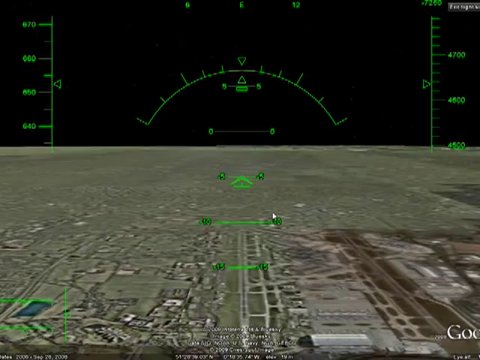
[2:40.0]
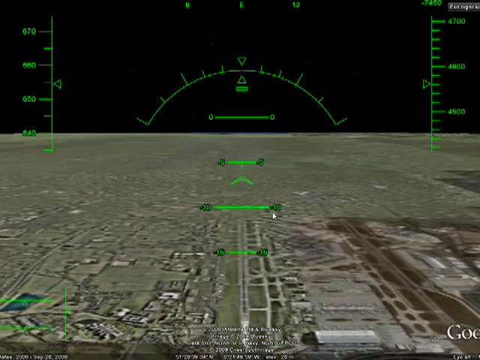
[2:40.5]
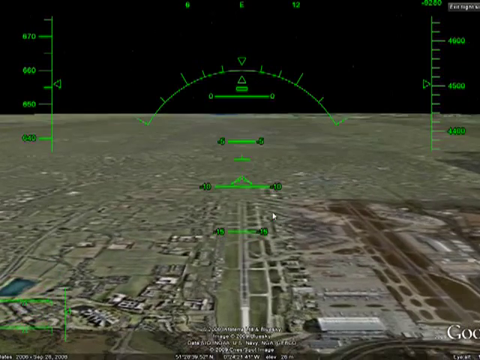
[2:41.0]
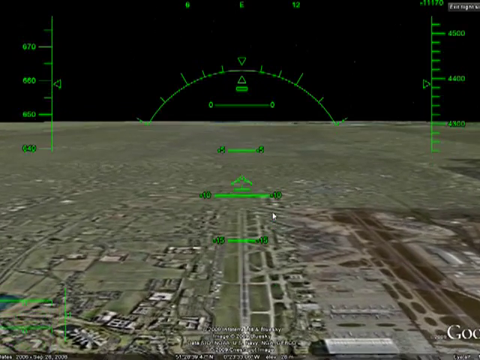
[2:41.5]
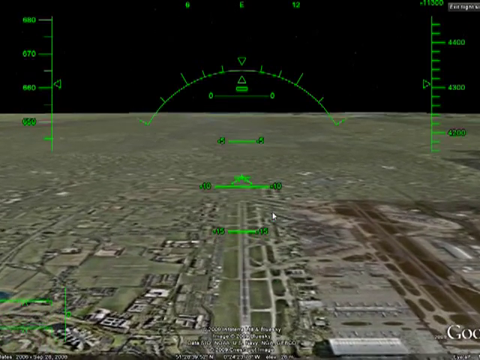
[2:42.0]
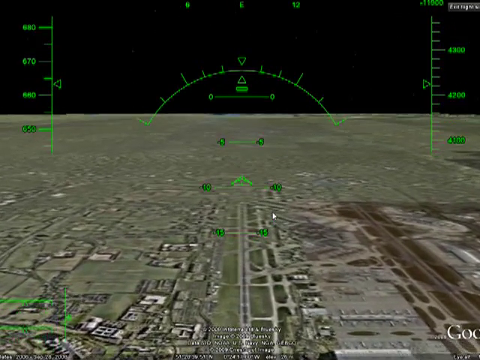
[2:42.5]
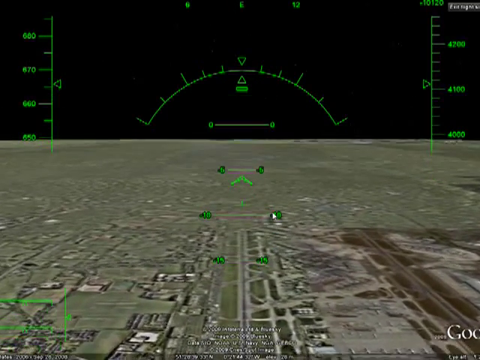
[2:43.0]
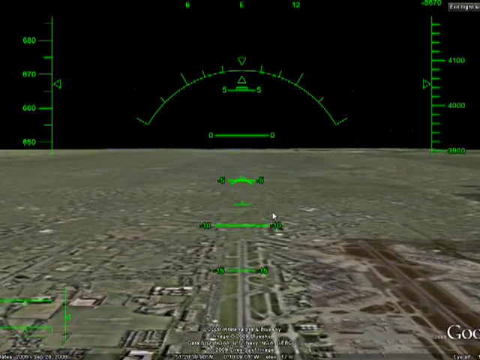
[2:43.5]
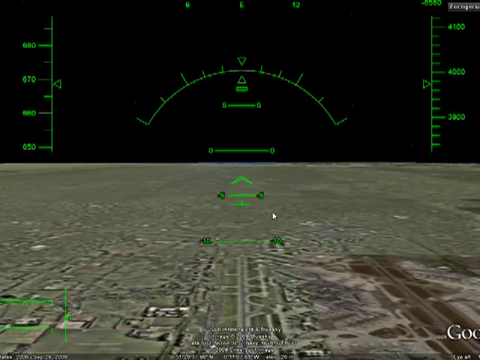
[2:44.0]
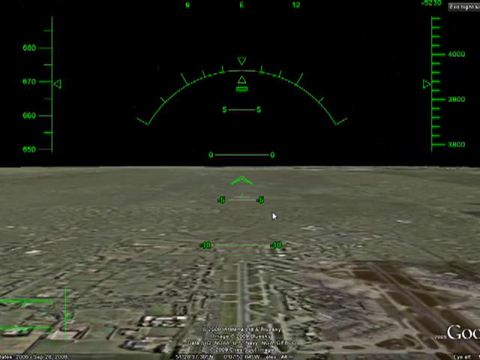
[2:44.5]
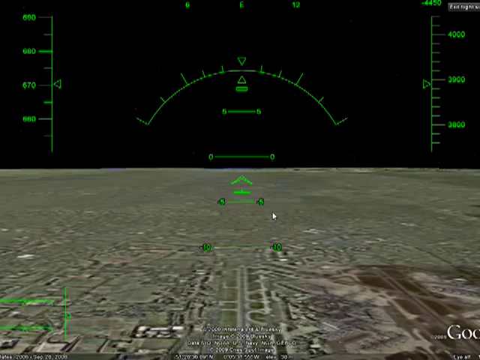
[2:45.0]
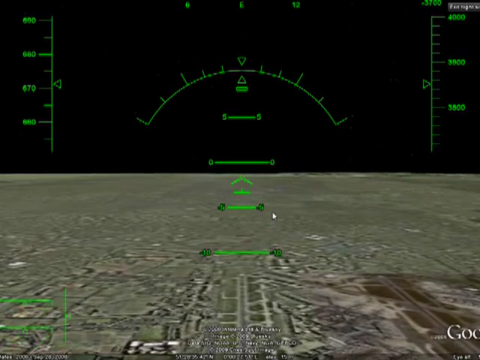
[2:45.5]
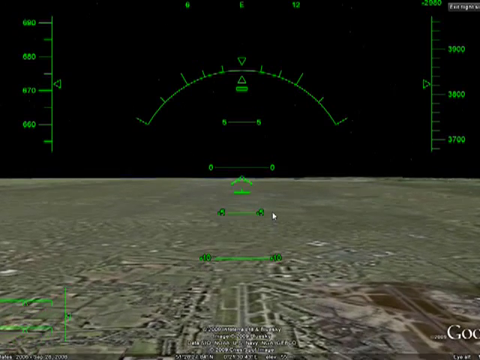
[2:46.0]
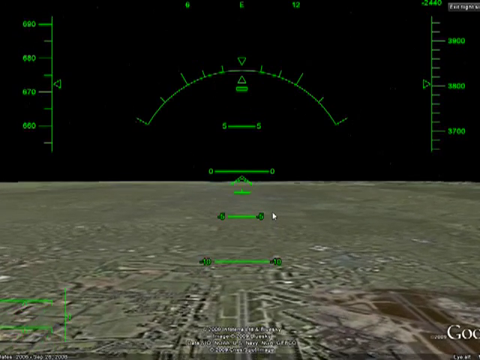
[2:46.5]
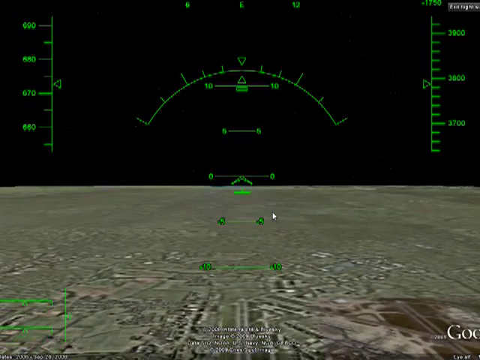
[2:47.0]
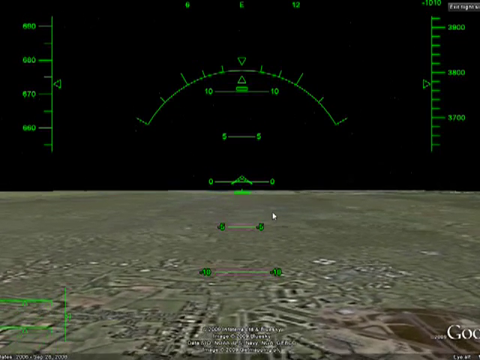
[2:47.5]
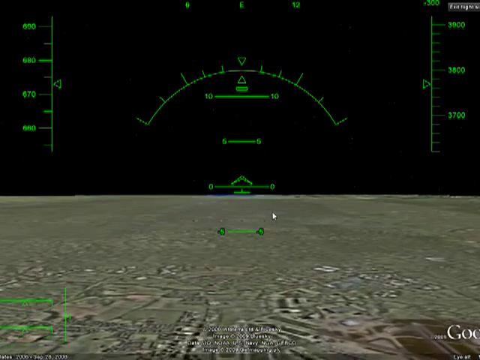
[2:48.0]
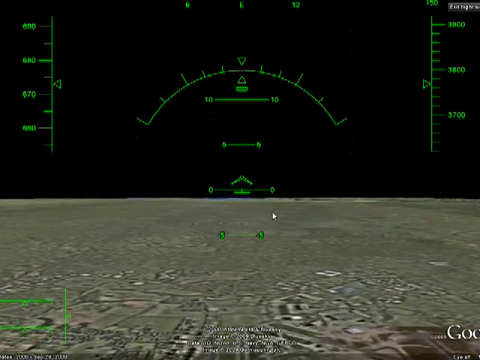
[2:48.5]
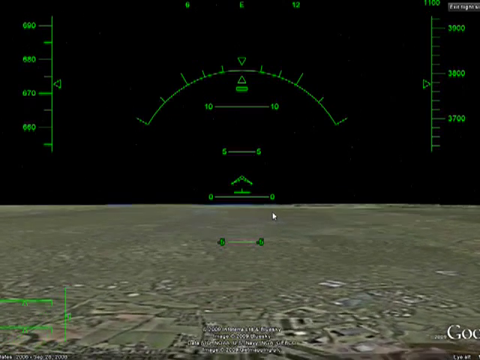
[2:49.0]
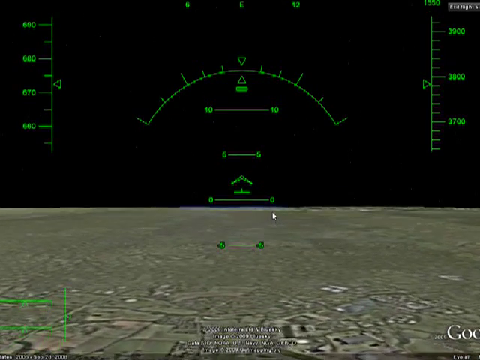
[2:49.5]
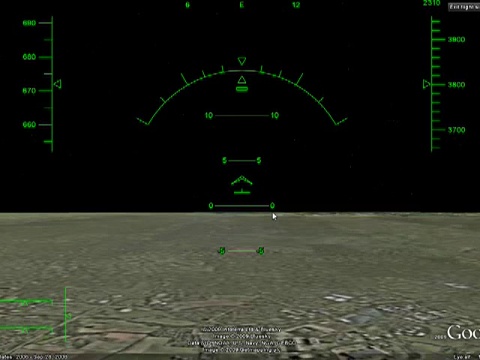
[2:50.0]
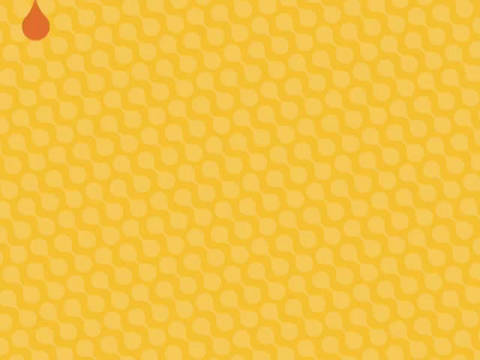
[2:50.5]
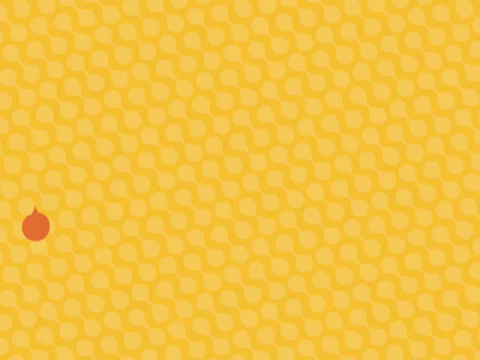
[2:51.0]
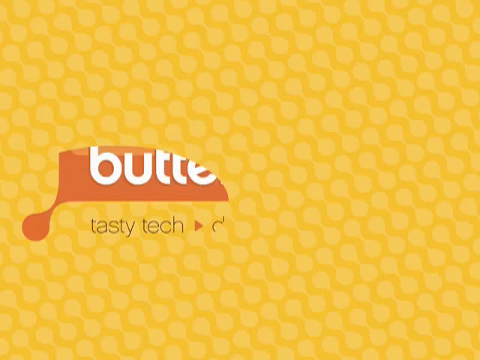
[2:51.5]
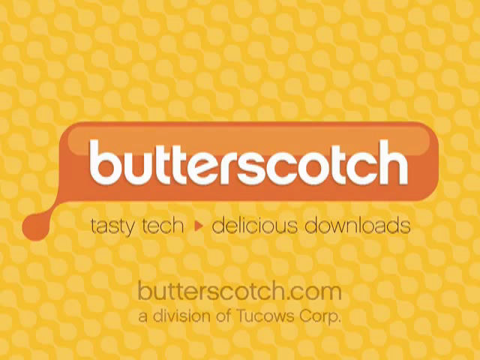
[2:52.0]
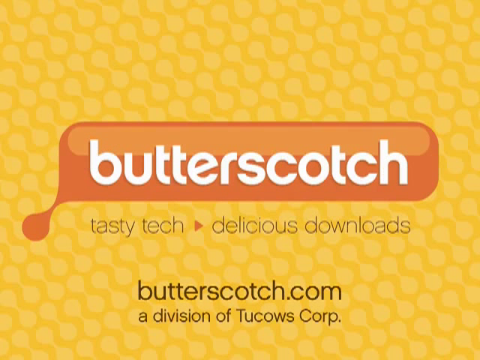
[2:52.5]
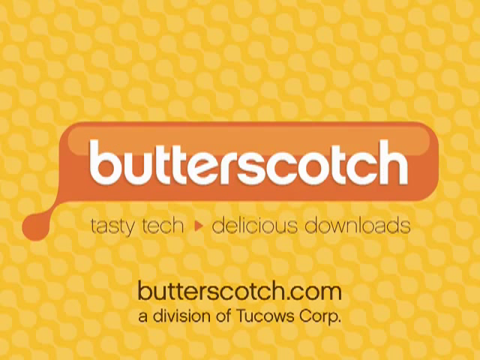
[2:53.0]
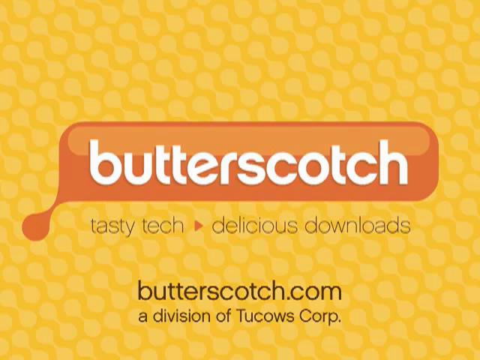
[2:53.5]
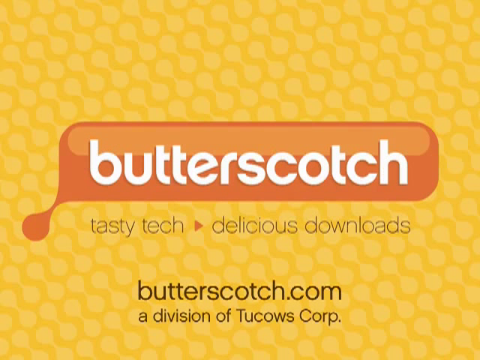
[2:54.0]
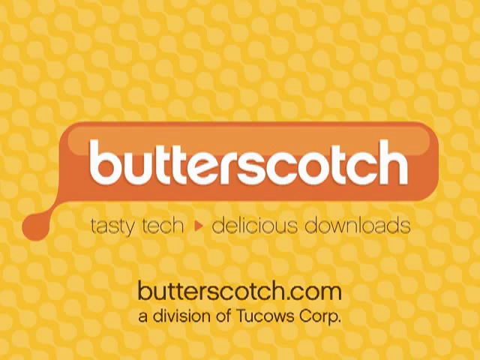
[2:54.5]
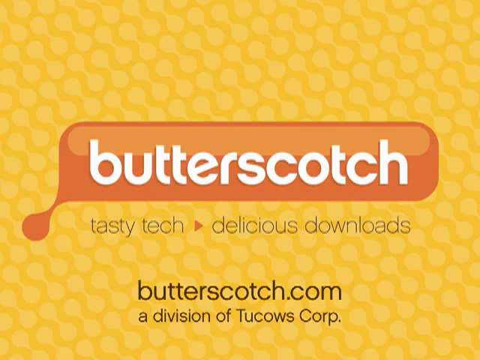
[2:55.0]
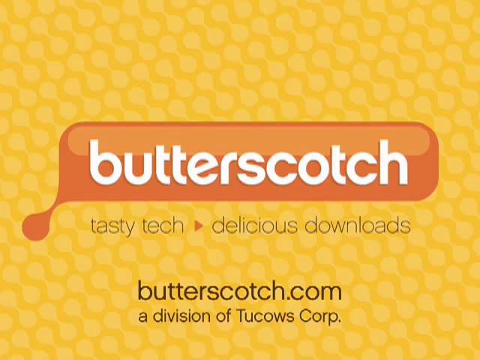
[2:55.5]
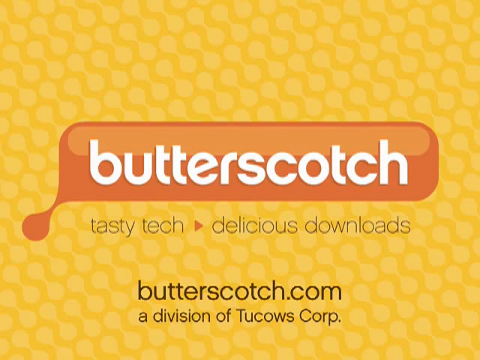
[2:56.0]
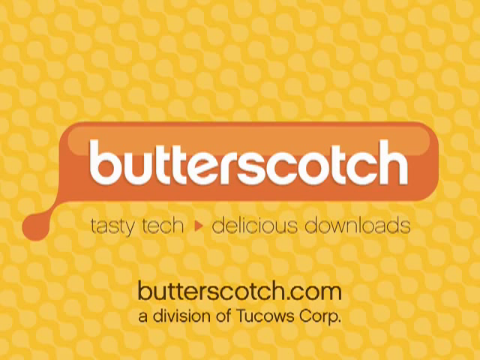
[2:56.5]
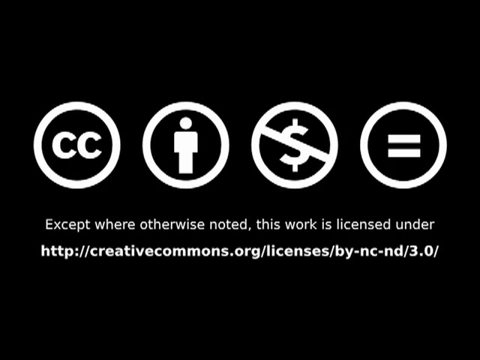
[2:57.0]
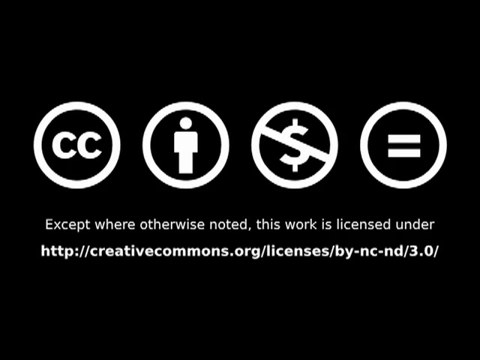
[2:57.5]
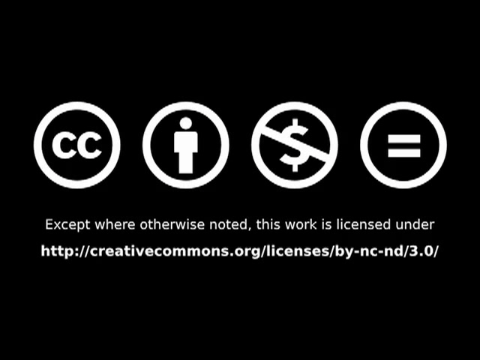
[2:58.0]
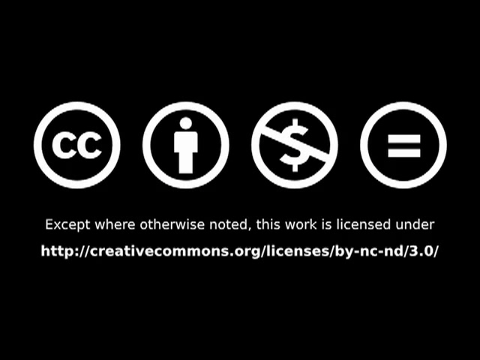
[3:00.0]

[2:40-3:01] The plane is flying again at a speed of 670, shown on the green bar on the left-hand side, and an altitude of 3,800, shown on the bar on the right-hand side. There appears to be a runway below, but the plane does not land on it. Then the Butterscotch logo, in white text in an orange box, appears again in front of the yellow, honey-patterned background, with black text reading "Tastiest tech now and delicious downloads. Butterscotch.com, a division of Two Cows Corp." At the end, a black screen reads "this work is licensed under creativecommons.org licenses by ncnd 3.0" with four icons: one with cc, one with a person, one with a crossed-out dollar sign and one with an equals sign.